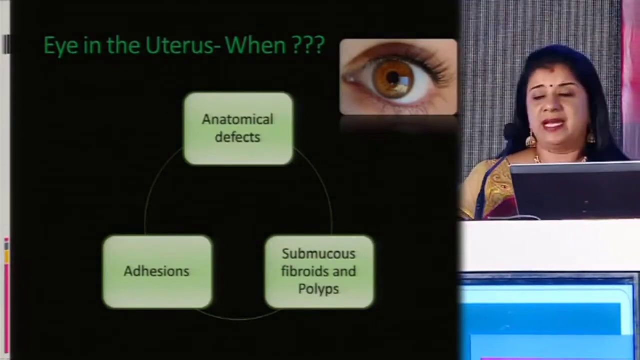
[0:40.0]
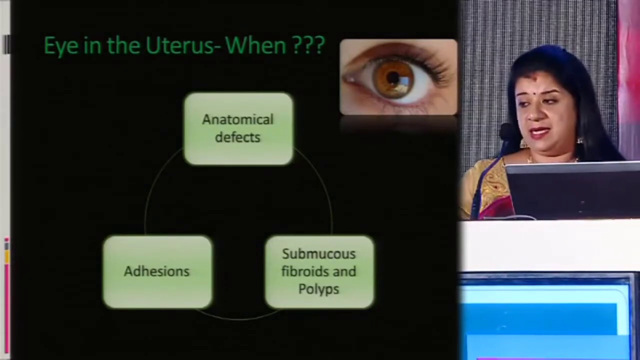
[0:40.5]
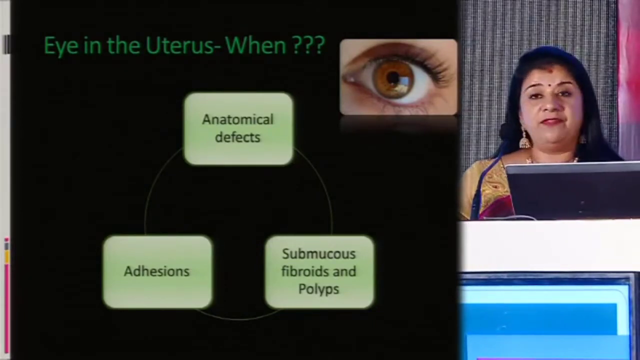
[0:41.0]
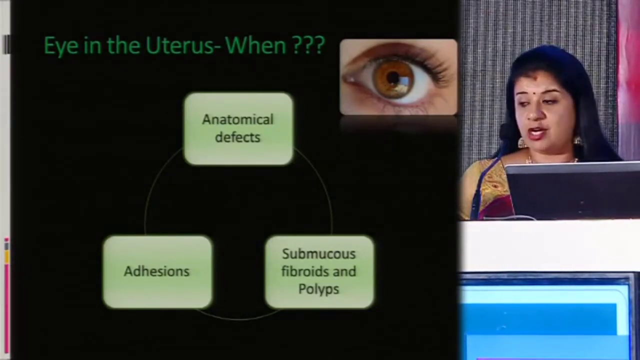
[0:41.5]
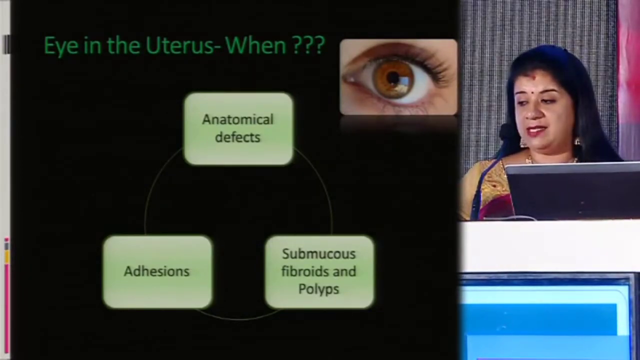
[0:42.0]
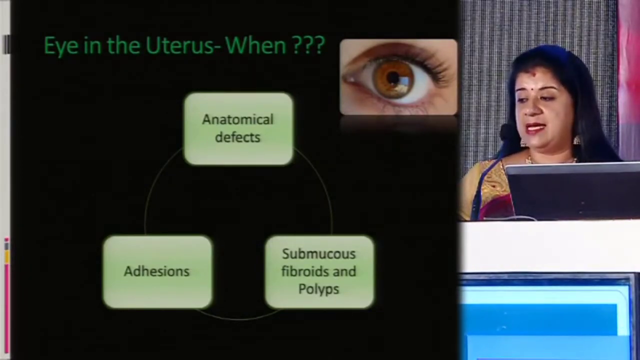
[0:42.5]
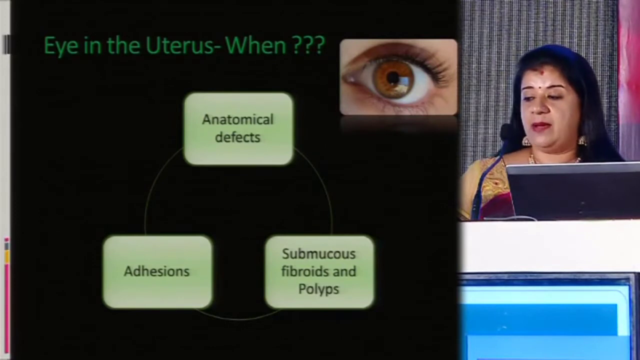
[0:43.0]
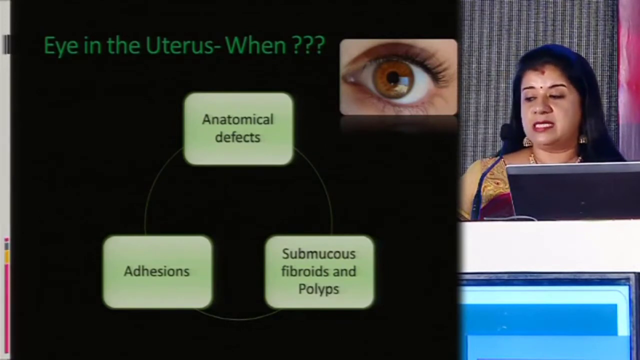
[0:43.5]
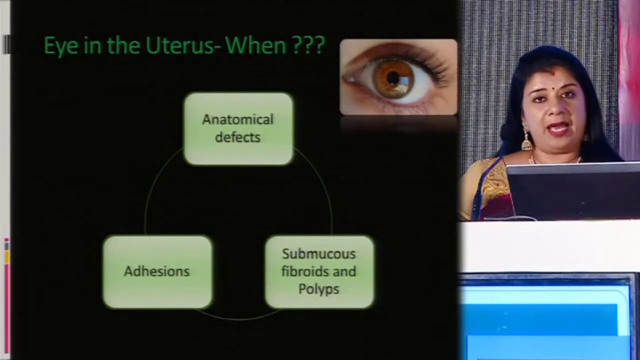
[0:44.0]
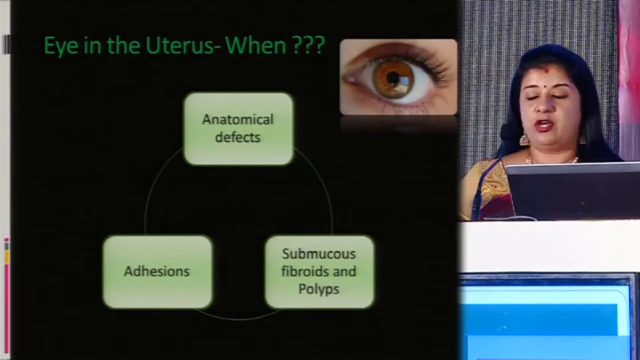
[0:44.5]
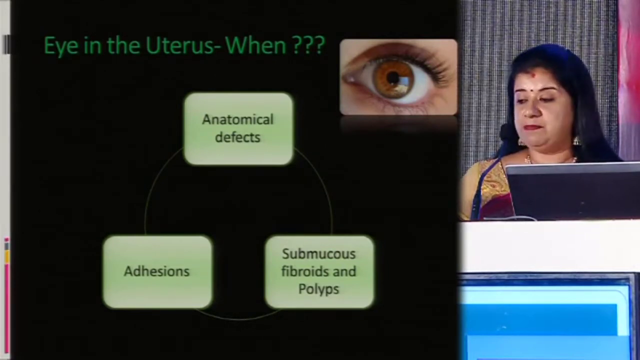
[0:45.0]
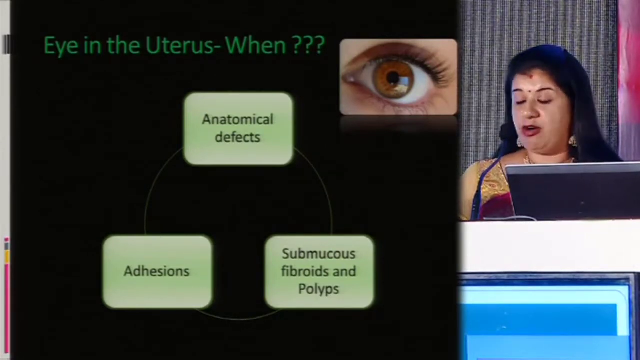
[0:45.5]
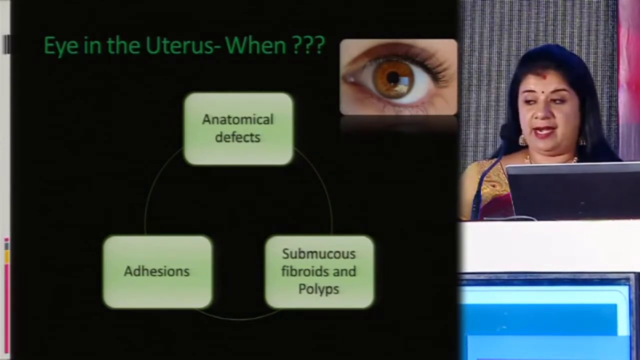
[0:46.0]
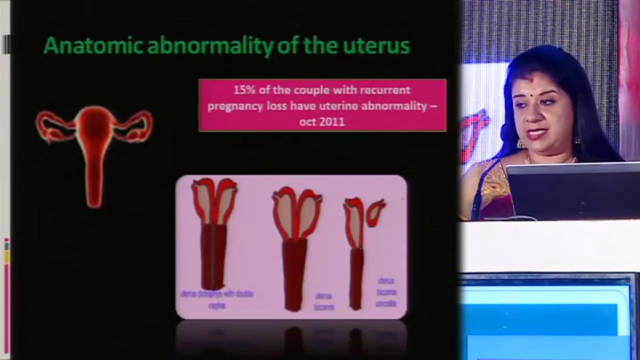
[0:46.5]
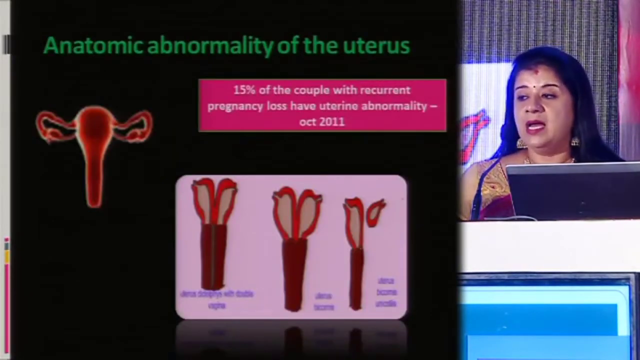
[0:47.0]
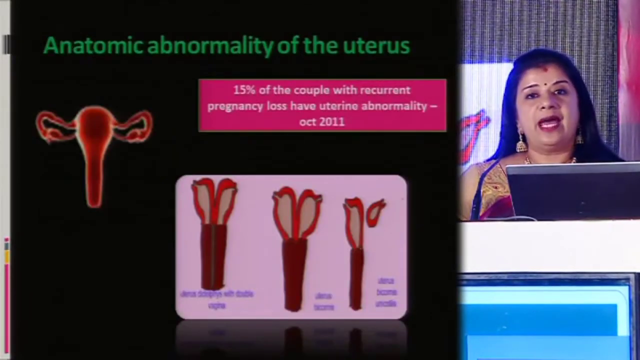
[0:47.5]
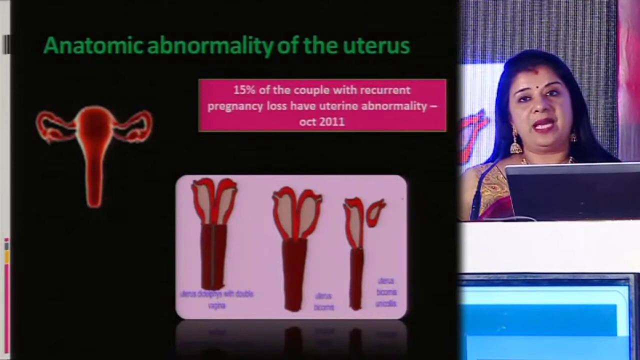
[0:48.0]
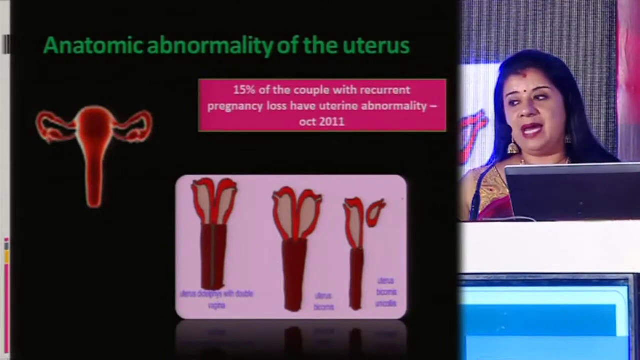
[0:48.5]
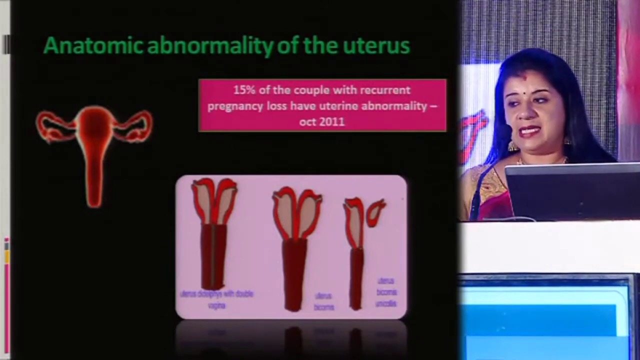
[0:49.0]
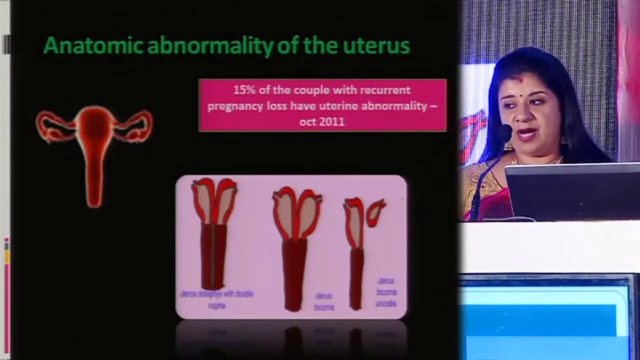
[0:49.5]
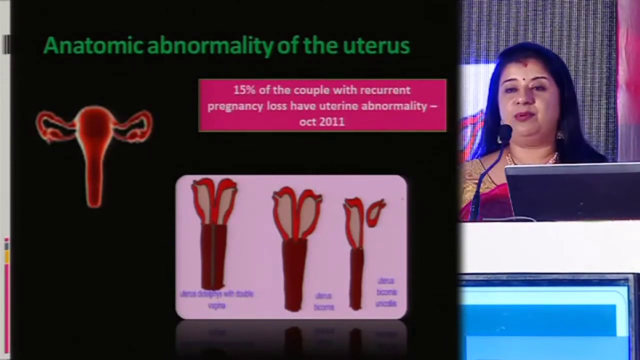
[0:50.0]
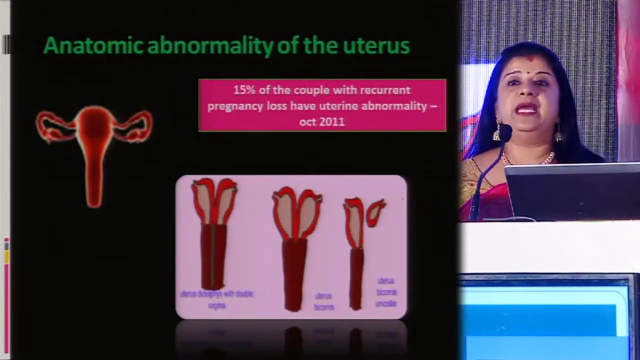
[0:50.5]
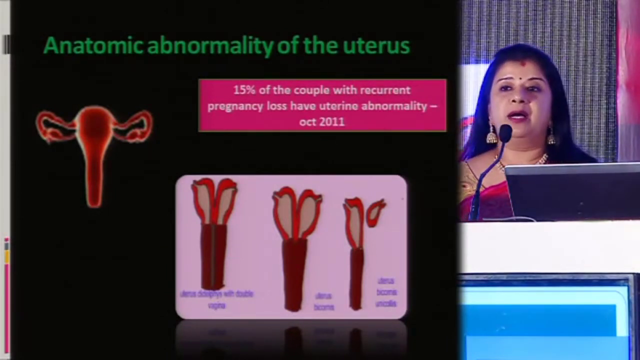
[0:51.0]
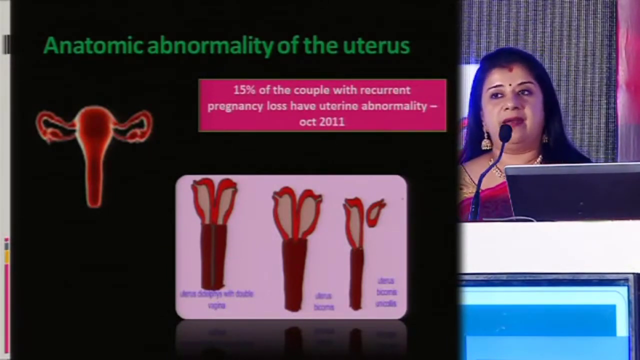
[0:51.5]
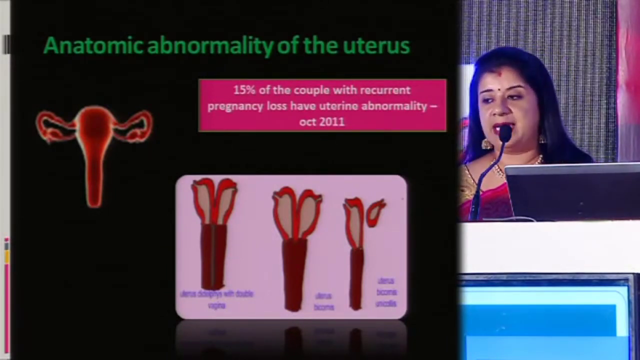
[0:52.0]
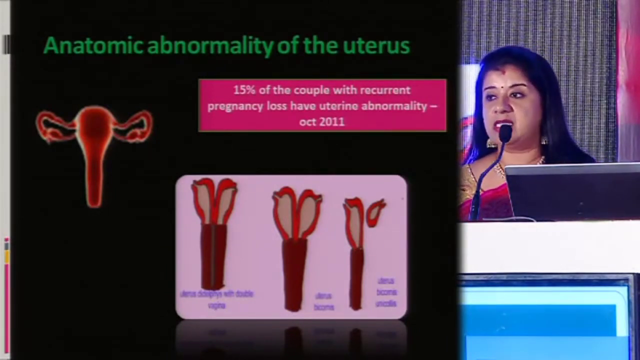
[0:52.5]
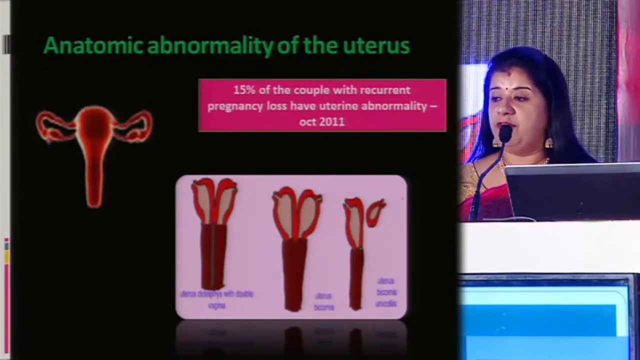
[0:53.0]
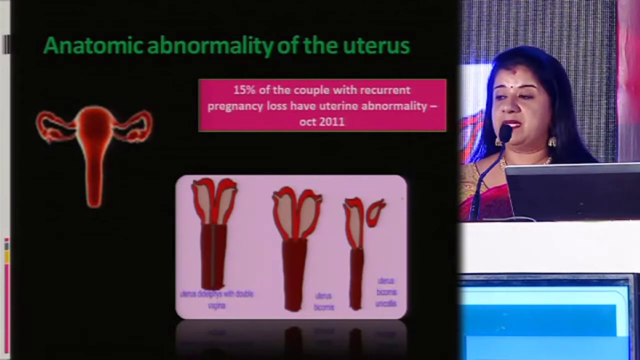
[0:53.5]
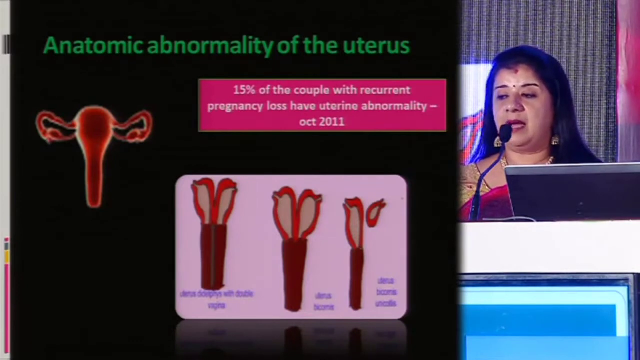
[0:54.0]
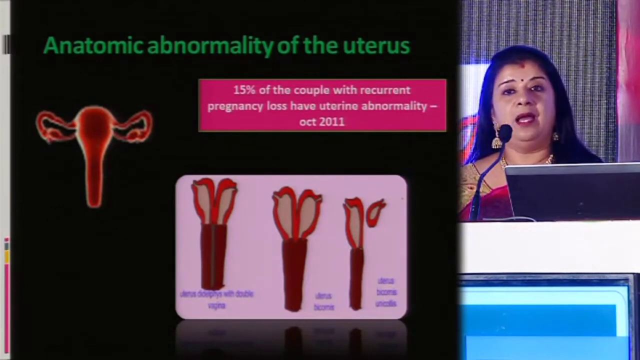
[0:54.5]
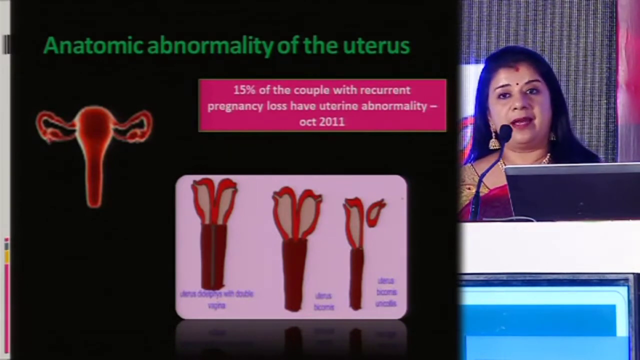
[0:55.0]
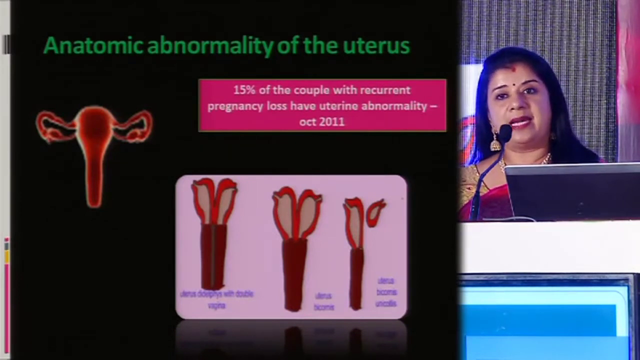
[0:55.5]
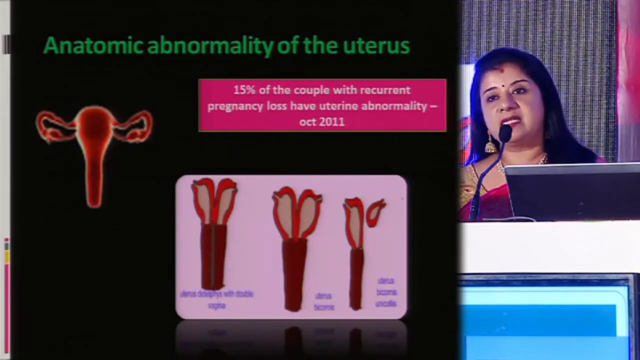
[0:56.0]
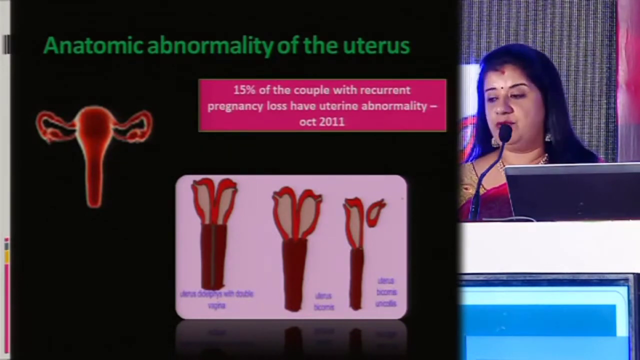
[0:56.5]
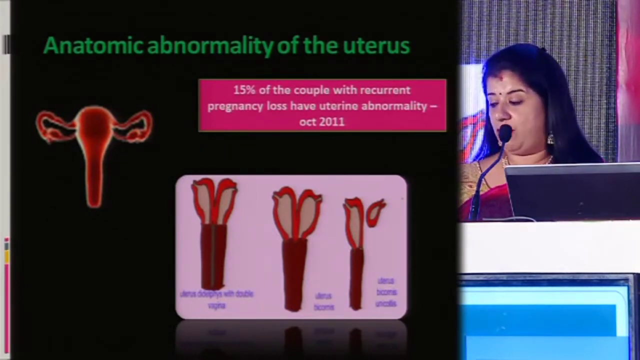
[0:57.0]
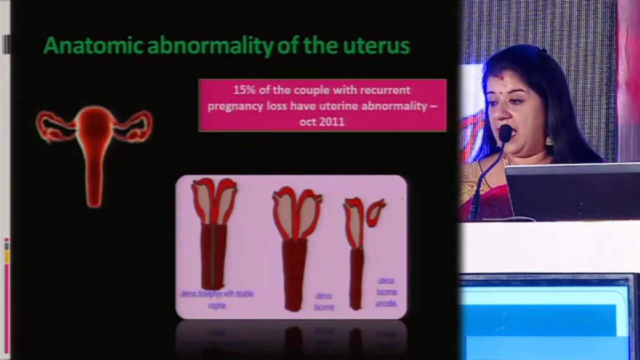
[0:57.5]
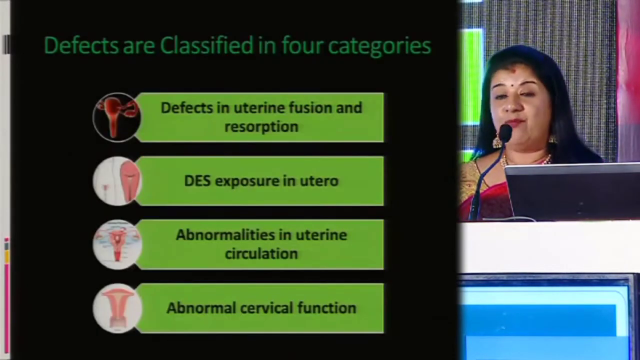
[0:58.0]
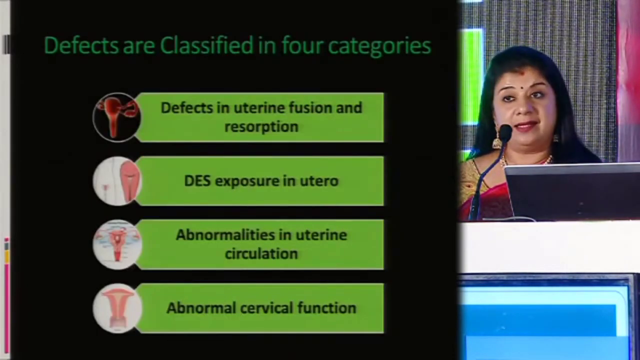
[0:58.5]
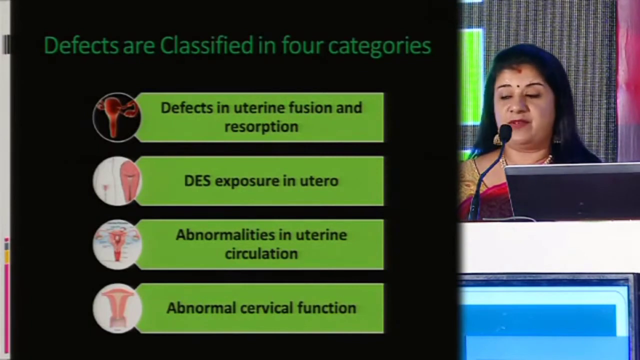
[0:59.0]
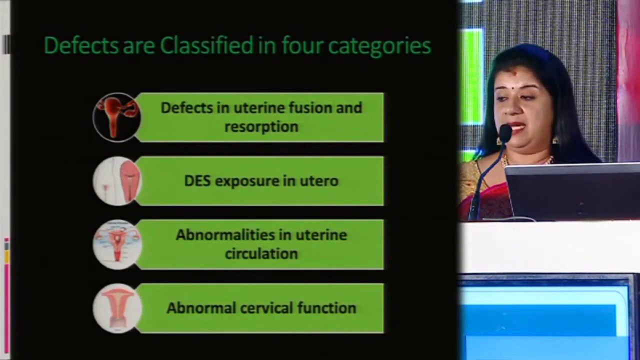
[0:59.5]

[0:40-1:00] A woman stands behind a computer with a microphone in front of her and is visibly talking into the microphone. Next to her is a slide titled "Eye in the Uterus, When," with a realistic picture of a human eye, a brown eye. Text on the screen says "Anatomical Defects, Submucous Fibroids and Polyps, and Adhesions." The slide then switches to one headed "anatomic abnormality of the uterus," showing a picture of a normal uterus and then different abnormalities that can occur in the uterus. The writing below the pictures is not readable, but they show the uterus pushed together and part of the uterus with what looks like a fallen tube. In a pink box, text says "50% of the couple with recurrent pregnancy loss have uterine abnormality."